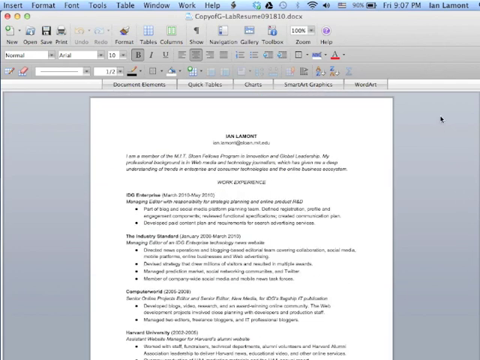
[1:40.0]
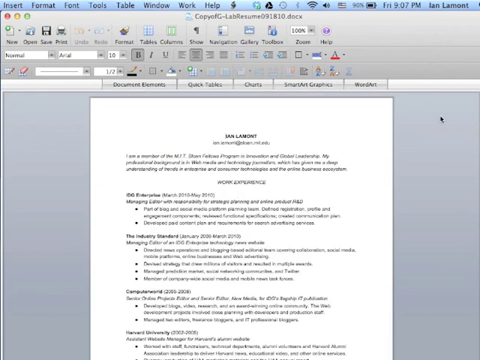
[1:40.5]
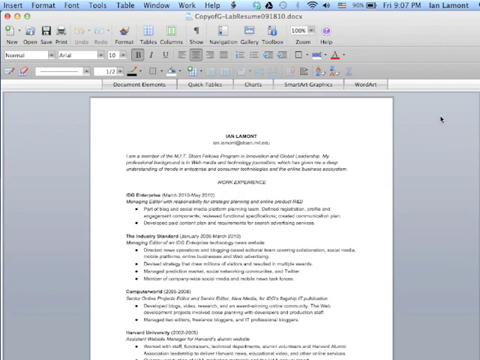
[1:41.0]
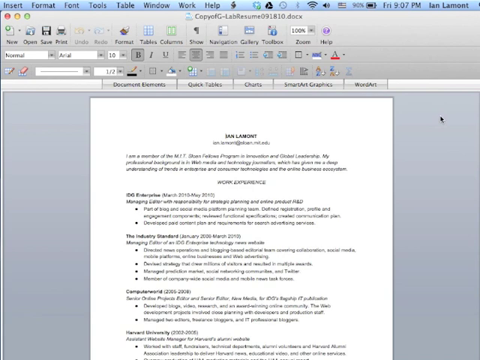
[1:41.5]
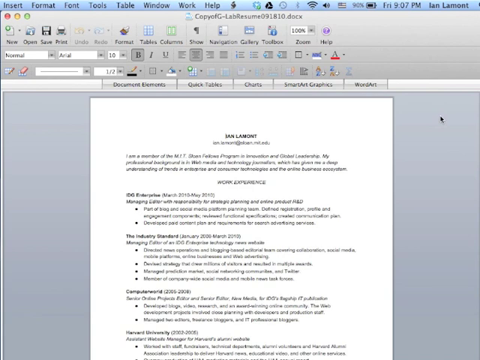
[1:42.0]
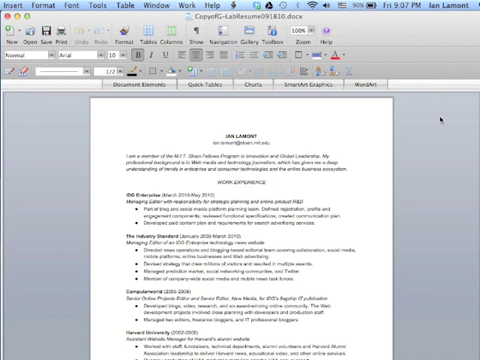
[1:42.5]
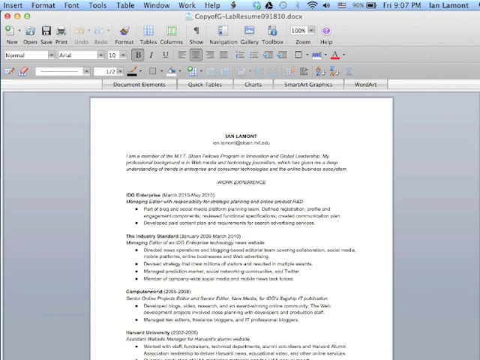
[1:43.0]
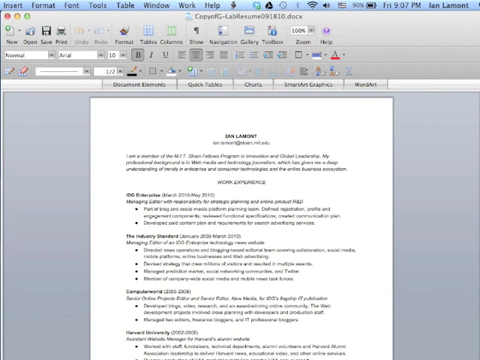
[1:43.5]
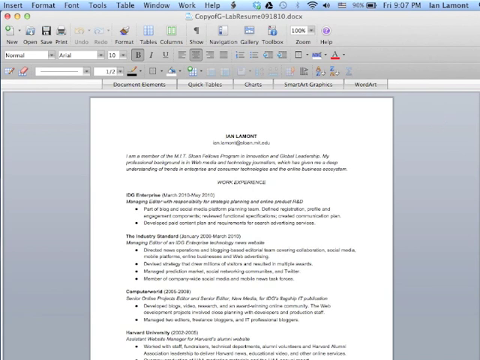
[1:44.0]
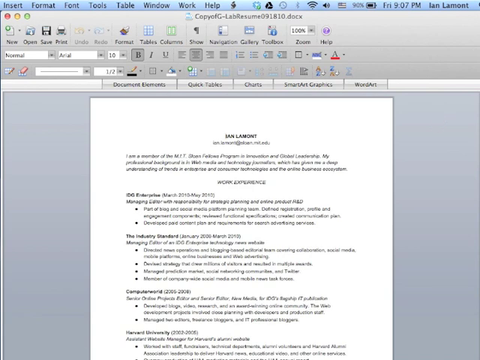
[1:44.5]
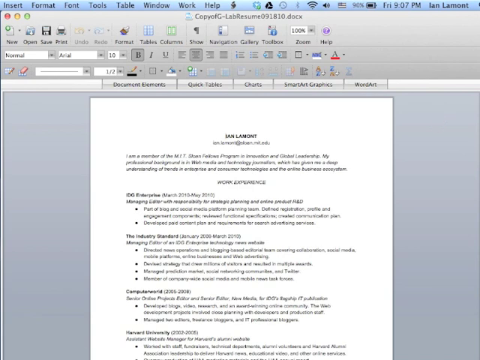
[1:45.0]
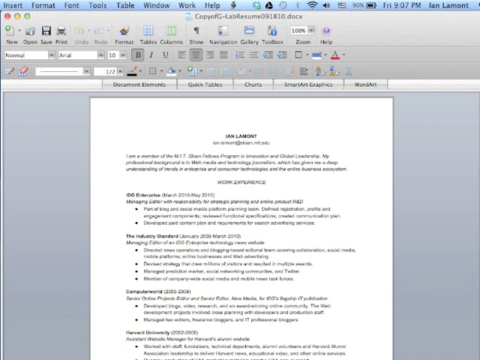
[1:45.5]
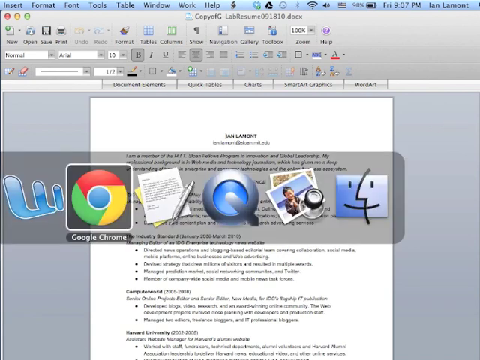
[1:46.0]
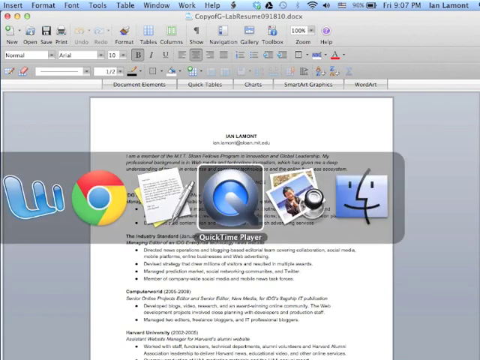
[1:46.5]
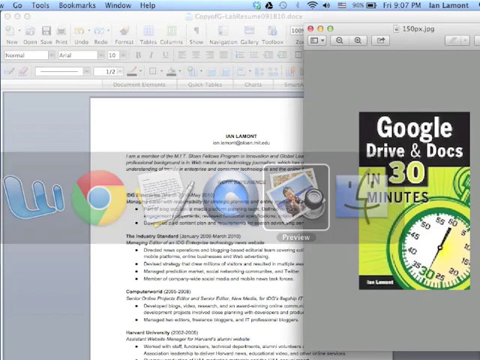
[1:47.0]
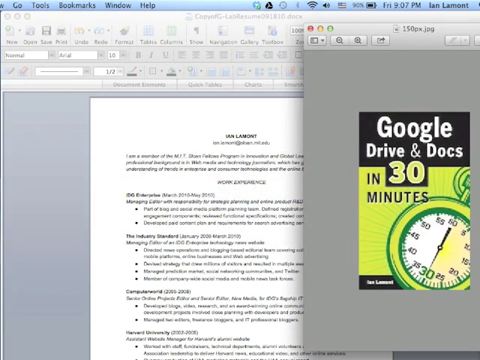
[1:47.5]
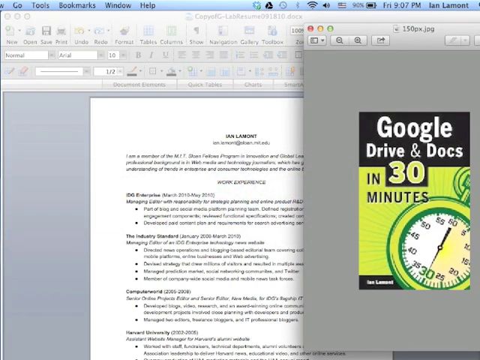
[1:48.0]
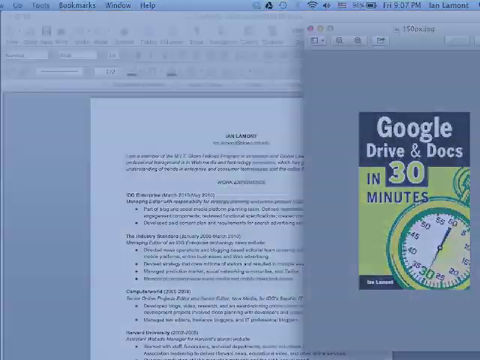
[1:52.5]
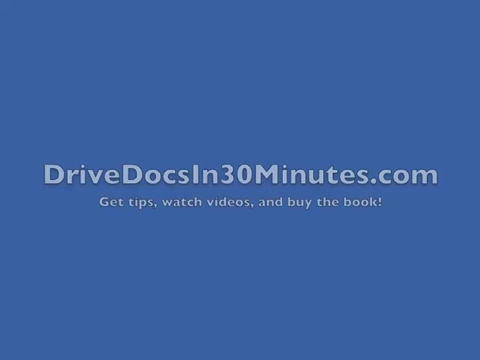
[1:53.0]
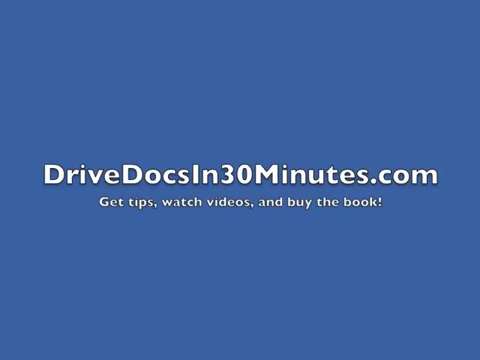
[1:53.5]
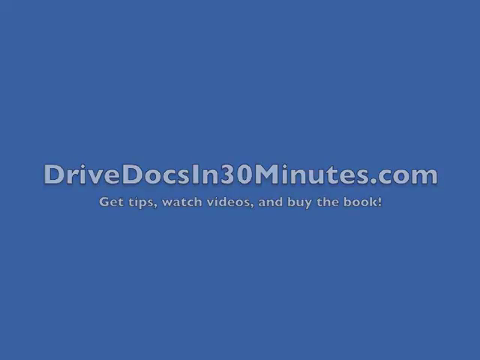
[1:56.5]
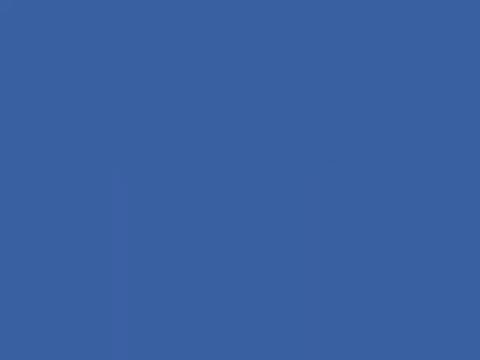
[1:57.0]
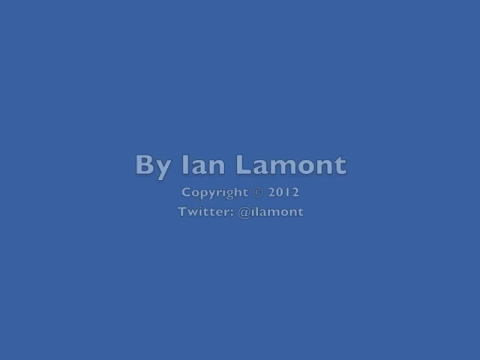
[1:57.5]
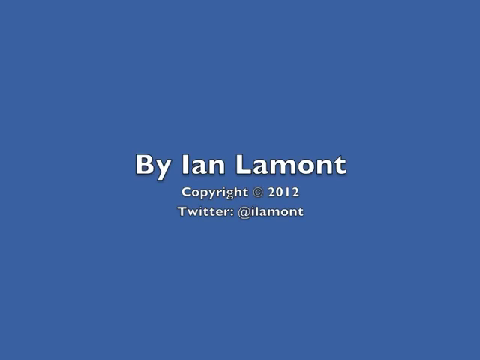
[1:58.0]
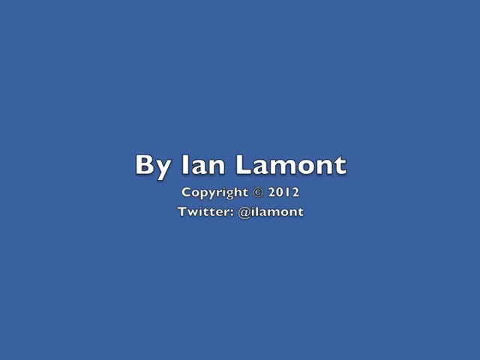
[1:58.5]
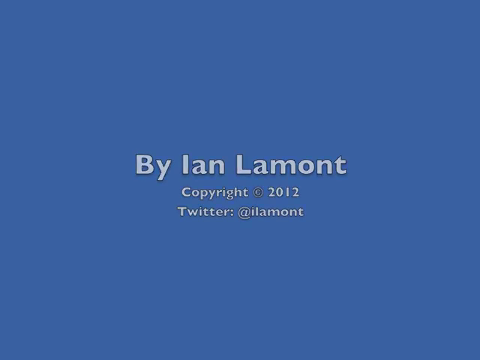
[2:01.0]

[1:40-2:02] The screen shows the Google Drive document changed to a Microsoft document, now with three pages. As the screen is navigated, various laptop symbols appear in the middle of the screen: the Chrome sign, a search sign, a picture that possibly symbolizes the webcam, "QuickTime player" written at the bottom, and a document with a pen. The picture of "Google Drive Docs in 30 minutes" then appears on the right side. The screen then changes to a blue background with text reading "drivedocsin30minutes.com", "get tips watch videos and buy the book" and "by Ian Lamont, Copyright 2012".